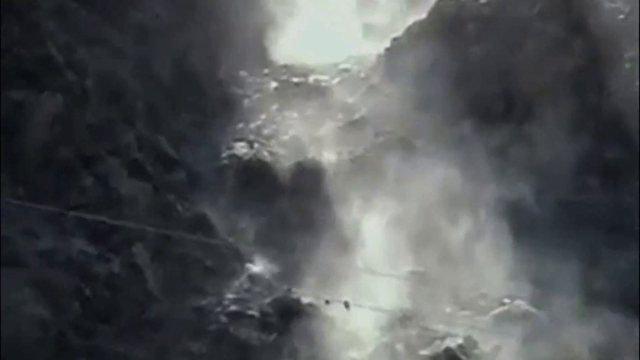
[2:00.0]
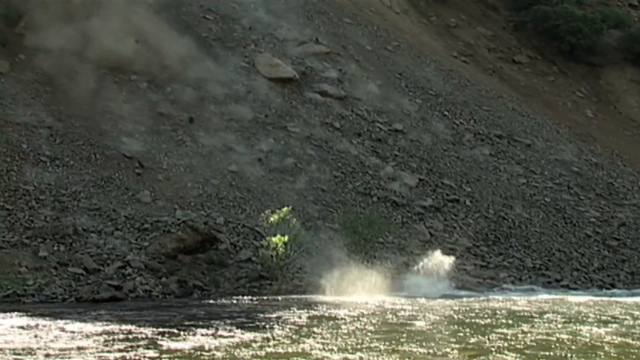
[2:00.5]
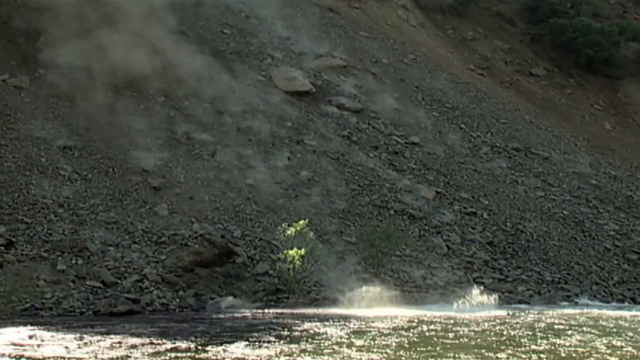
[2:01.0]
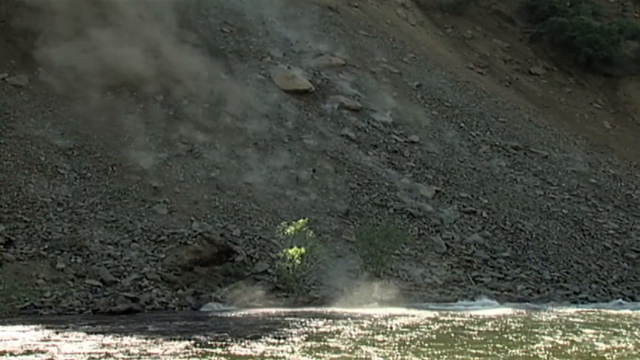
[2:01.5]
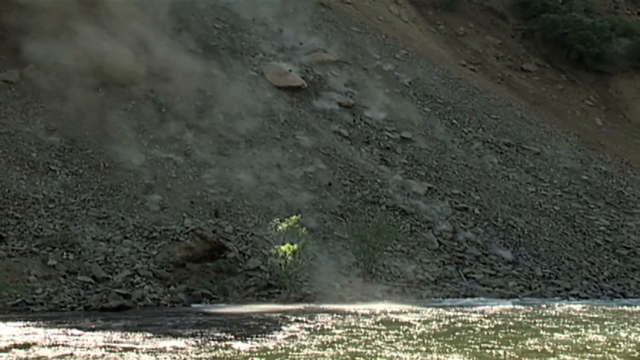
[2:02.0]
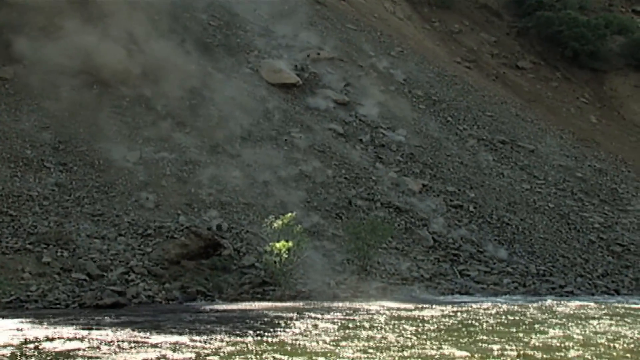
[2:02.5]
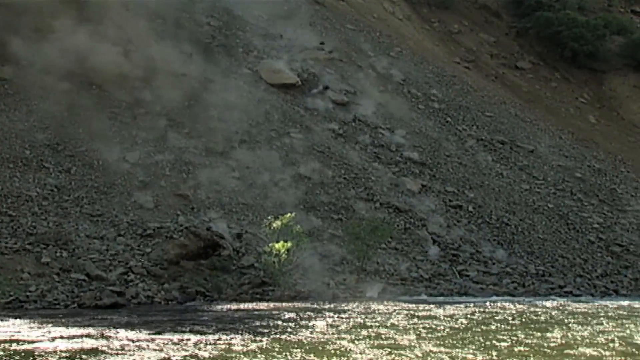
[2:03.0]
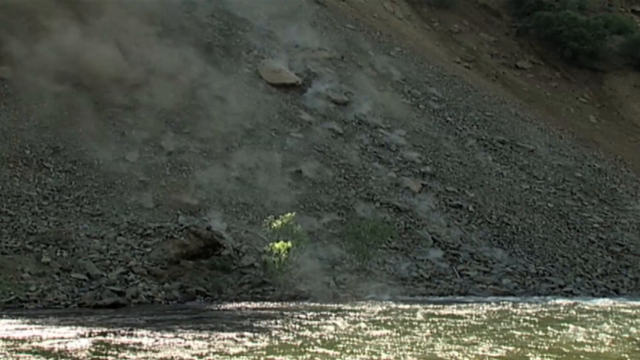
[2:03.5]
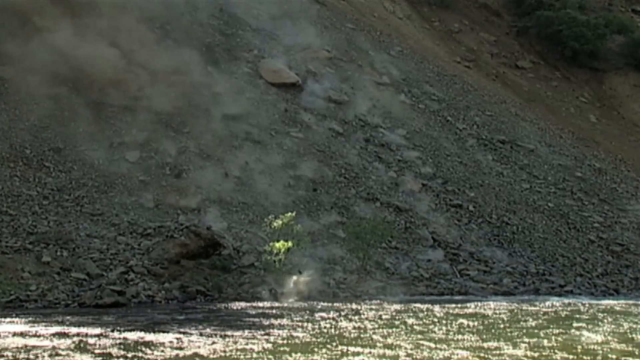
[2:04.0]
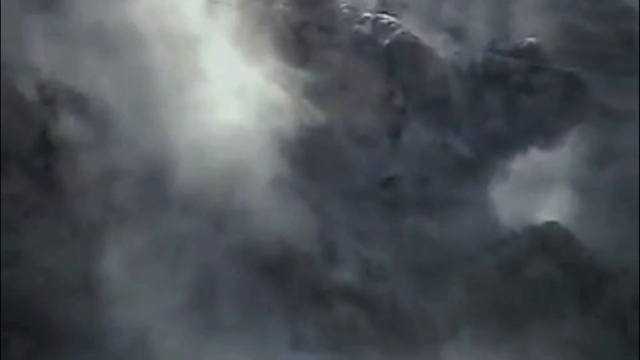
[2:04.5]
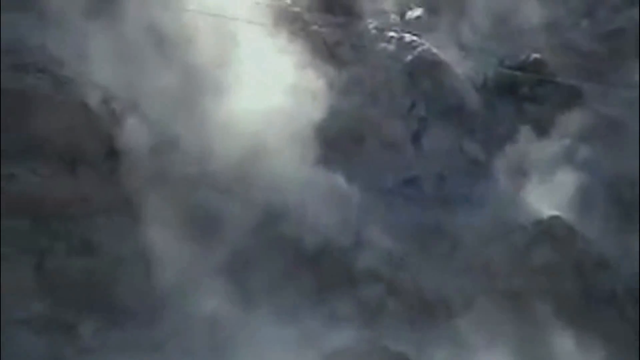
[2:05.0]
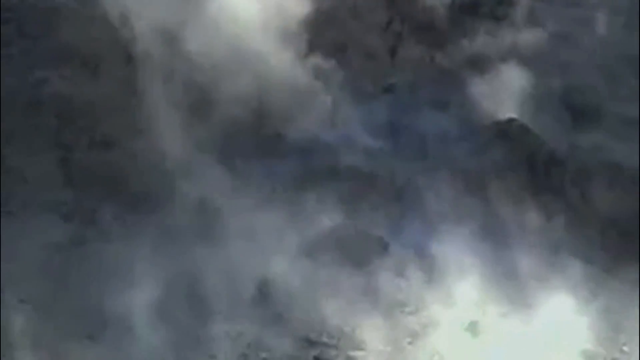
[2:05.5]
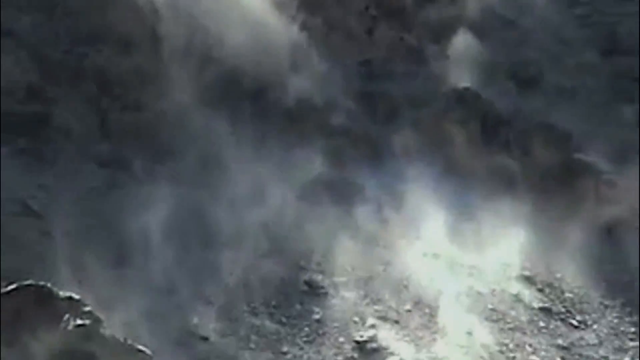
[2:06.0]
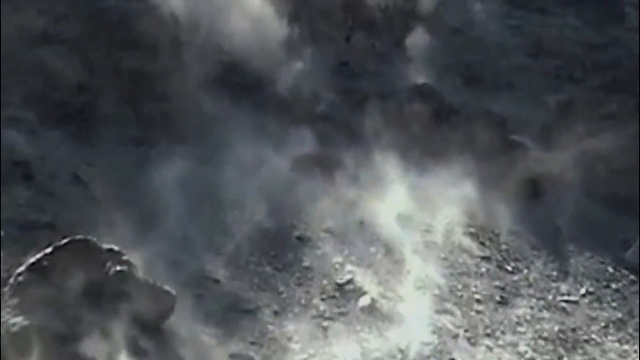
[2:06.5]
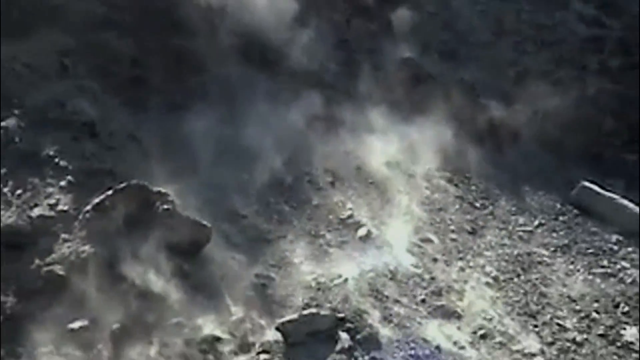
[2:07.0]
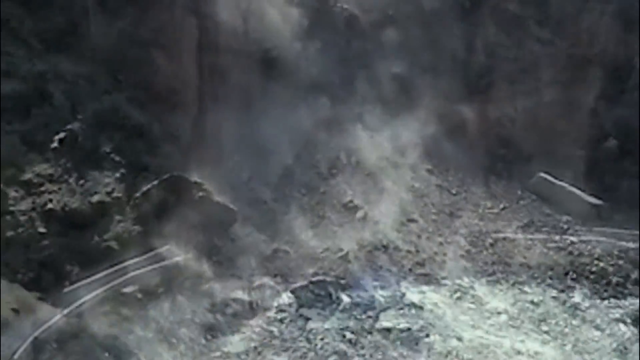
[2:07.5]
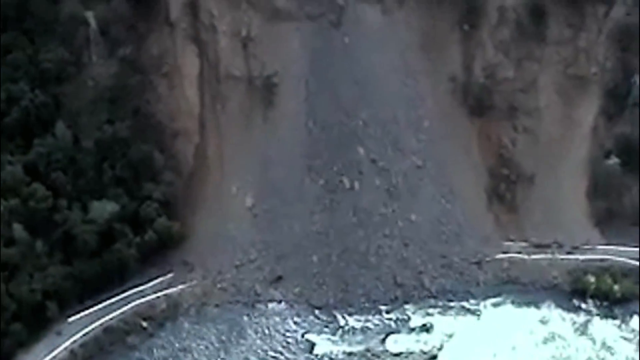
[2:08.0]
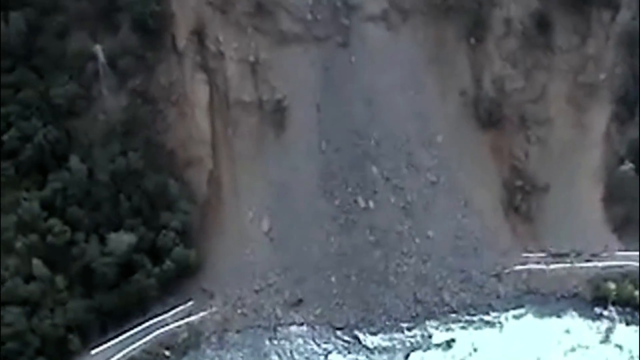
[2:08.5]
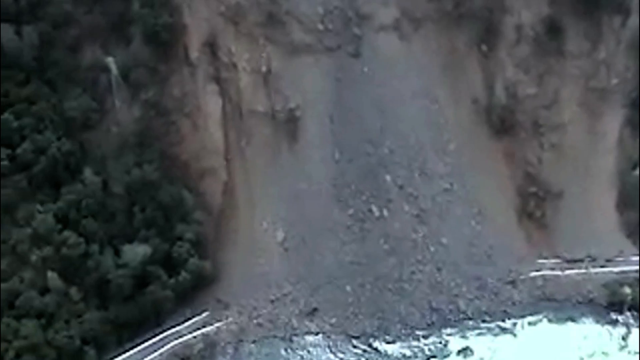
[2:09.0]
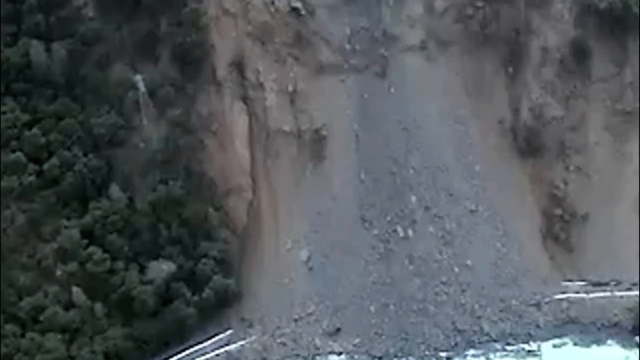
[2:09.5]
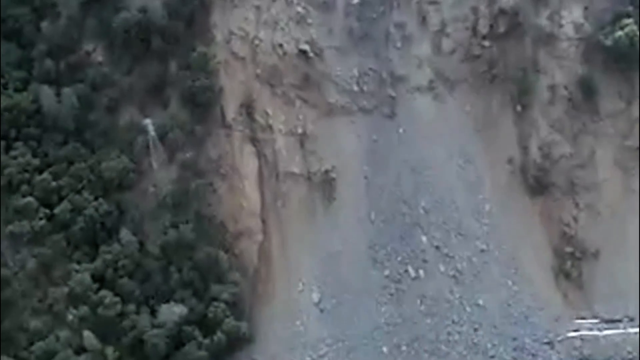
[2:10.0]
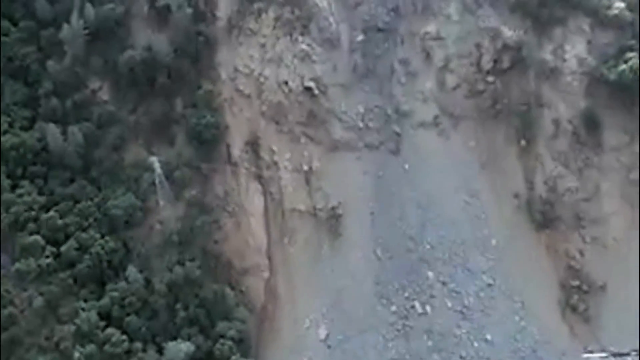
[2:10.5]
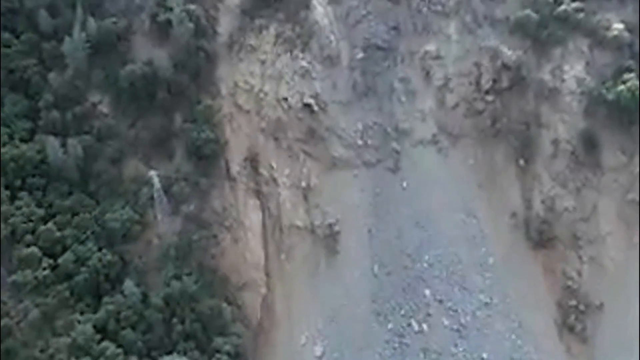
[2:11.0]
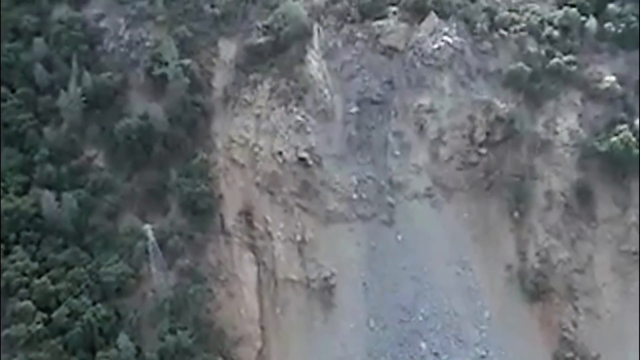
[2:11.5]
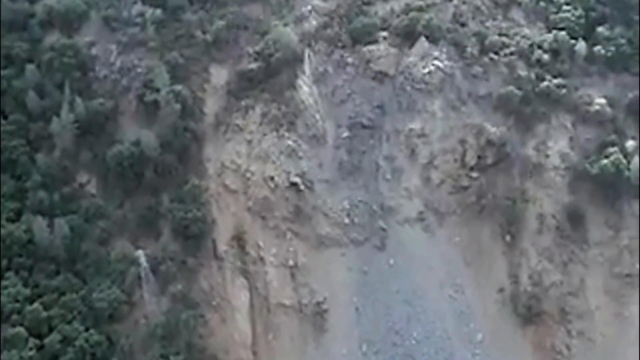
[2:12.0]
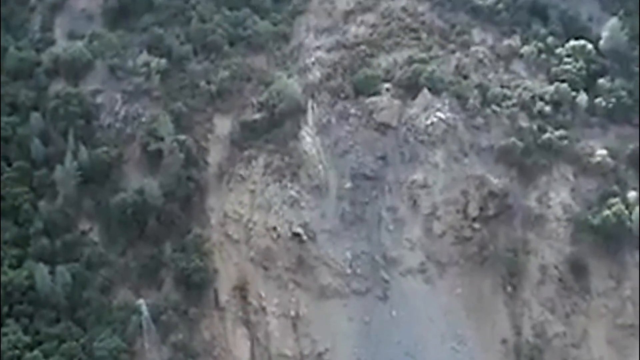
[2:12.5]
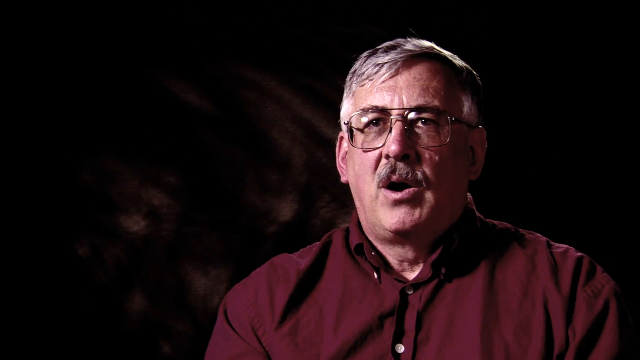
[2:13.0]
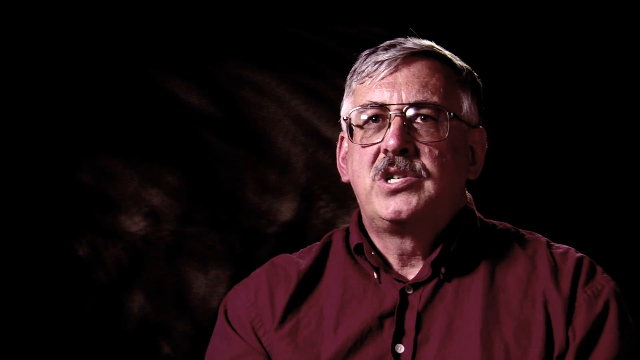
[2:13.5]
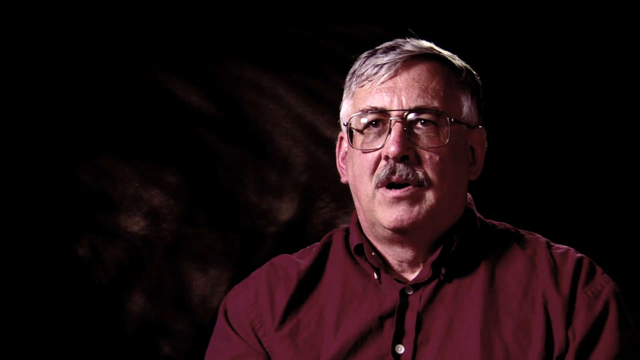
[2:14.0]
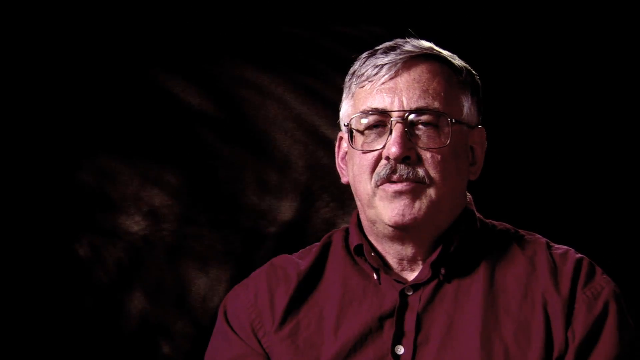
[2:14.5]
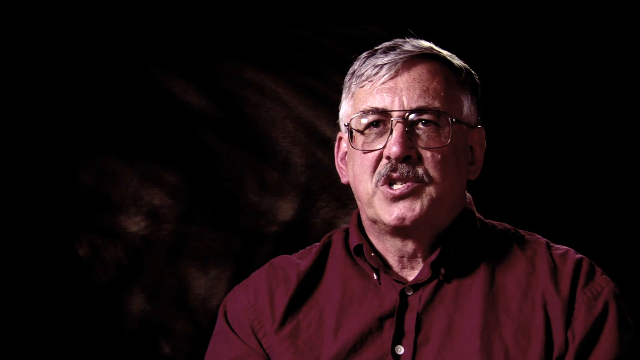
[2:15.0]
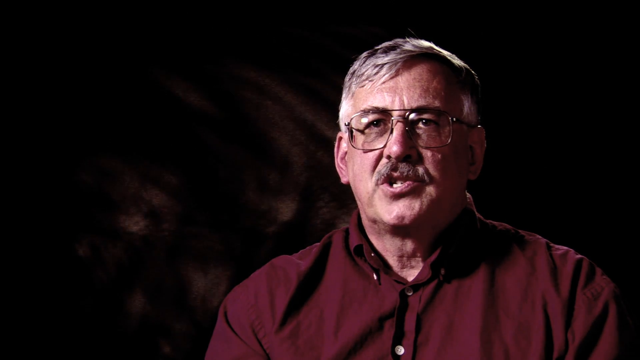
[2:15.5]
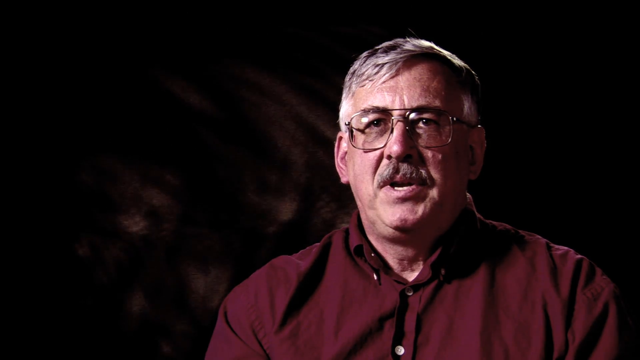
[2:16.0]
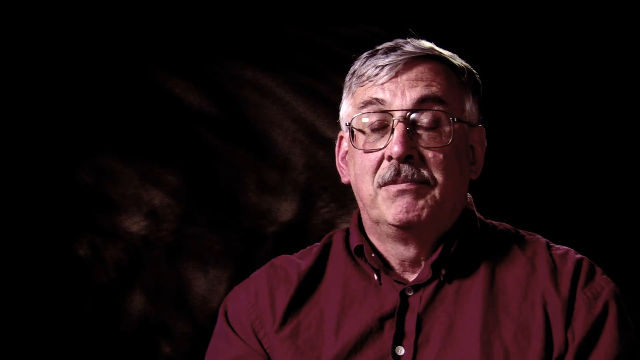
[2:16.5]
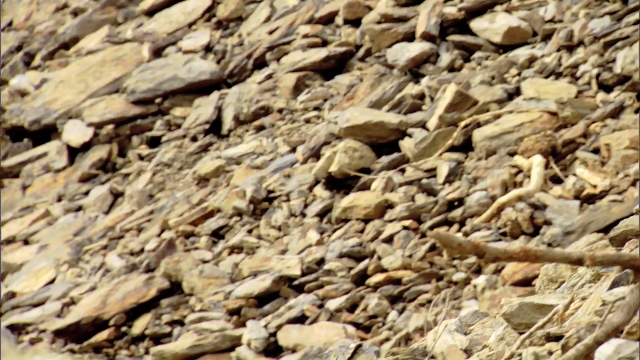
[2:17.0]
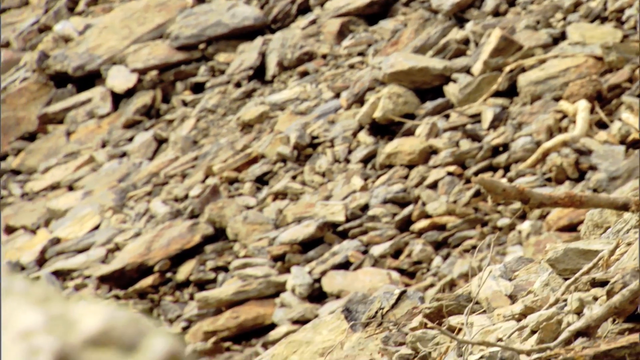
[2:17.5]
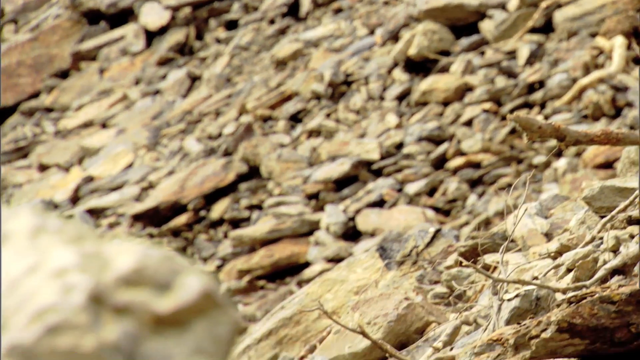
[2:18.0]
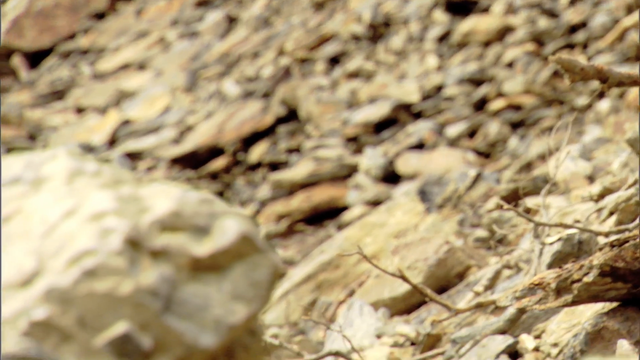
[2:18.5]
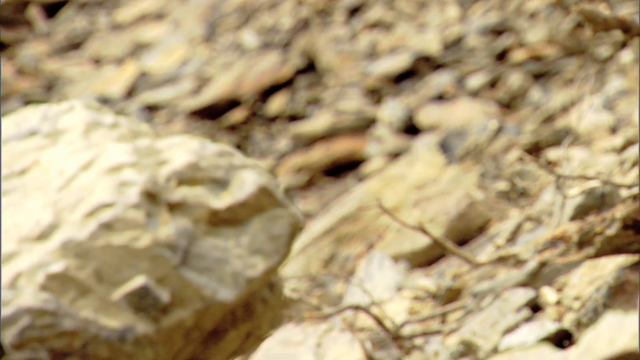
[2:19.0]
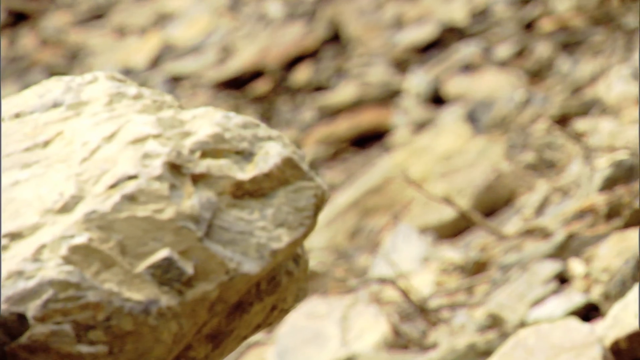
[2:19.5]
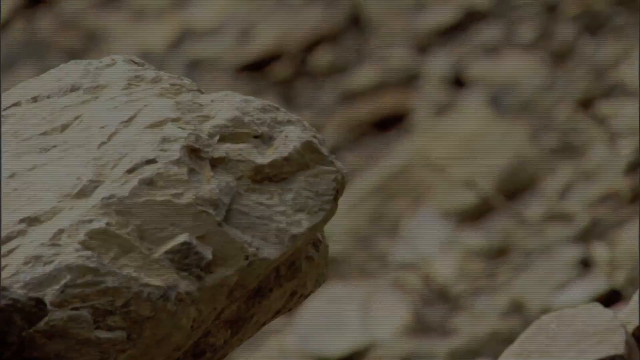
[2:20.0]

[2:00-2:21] Footage shows actual landslides occurring. On a mountain that is highest on the left, or west, side of the image, a landslide sends large boulders crashing down, with smoke everywhere from the debris of dirt and rocks. The camera backs out to look at the water below, a rushing river with white-capped waters meeting the smoke of the landslide. As the camera backs up, lots of forest is visible. A man with salt-and-pepper hair, who looks to be in his early 60s and is Caucasian with a rather bushy mustache, is shown. An outdoor close-up then shows rocks after they have hit the ground, in very bright daylight; the rocks are more tan-colored than the dark gray rocks seen earlier.